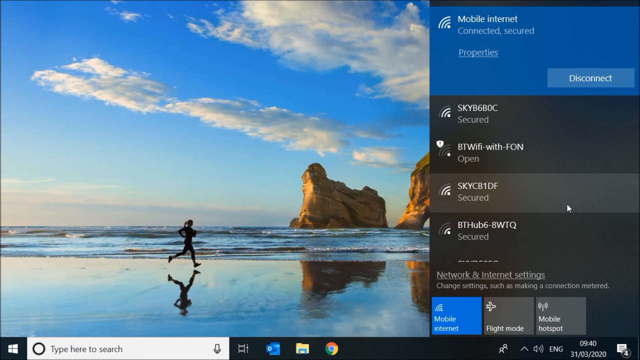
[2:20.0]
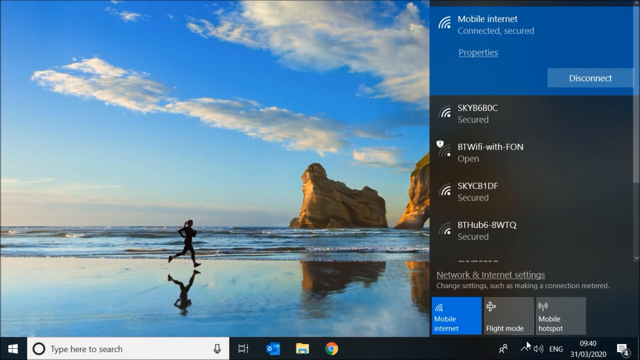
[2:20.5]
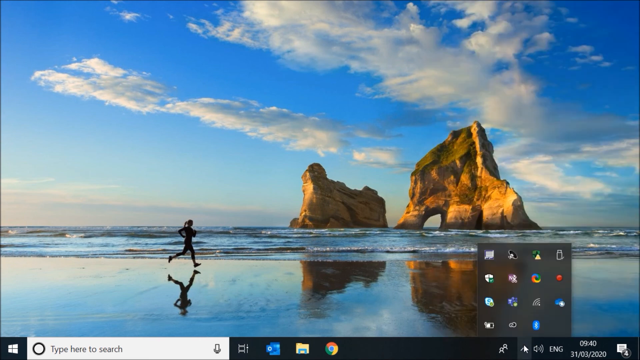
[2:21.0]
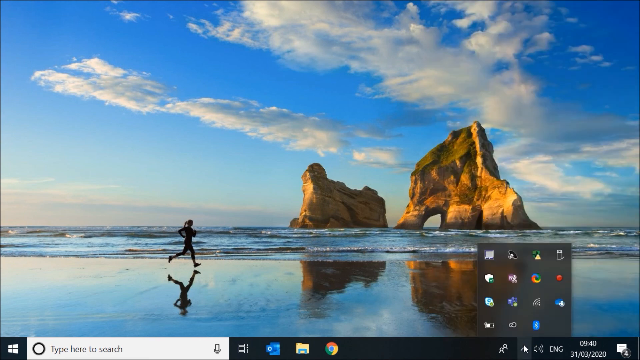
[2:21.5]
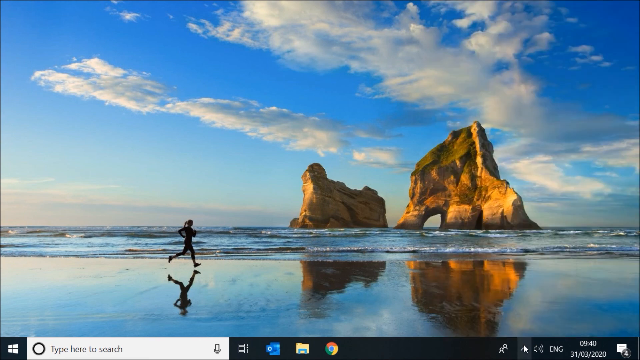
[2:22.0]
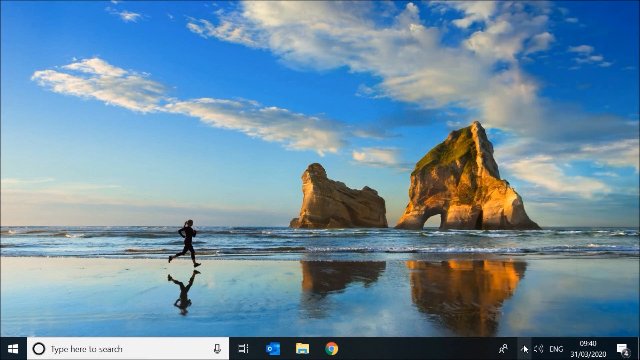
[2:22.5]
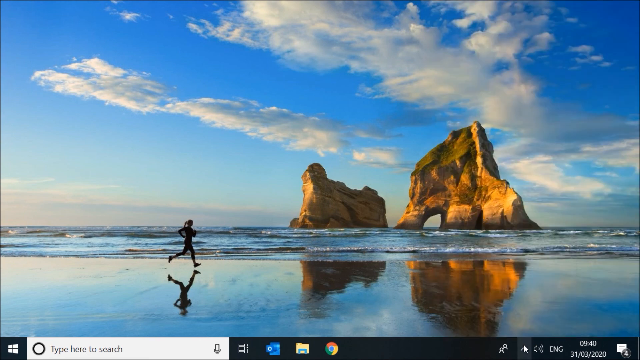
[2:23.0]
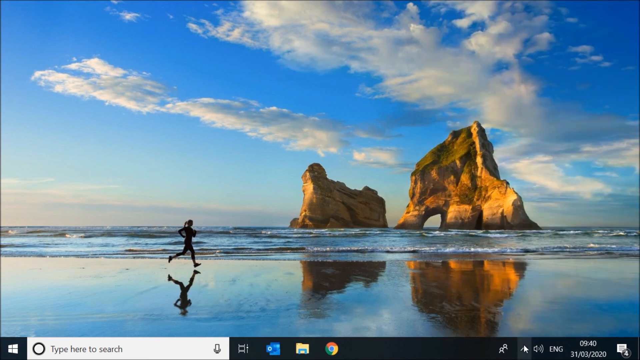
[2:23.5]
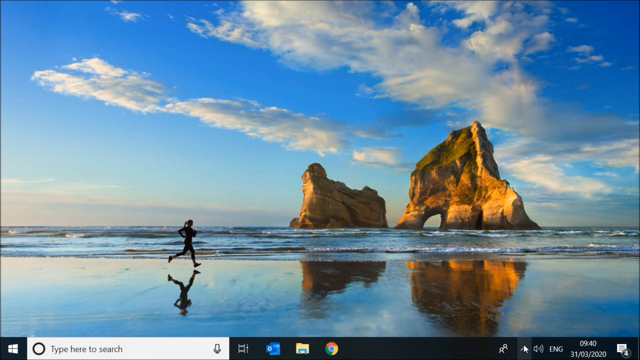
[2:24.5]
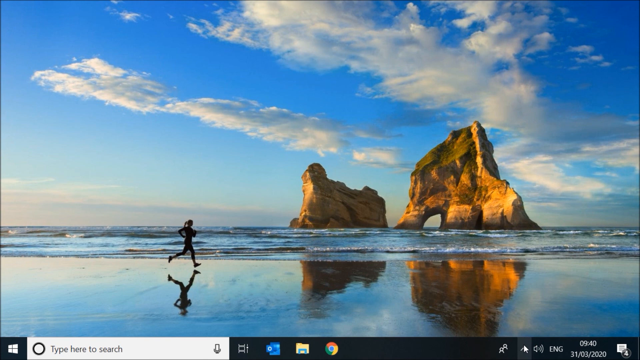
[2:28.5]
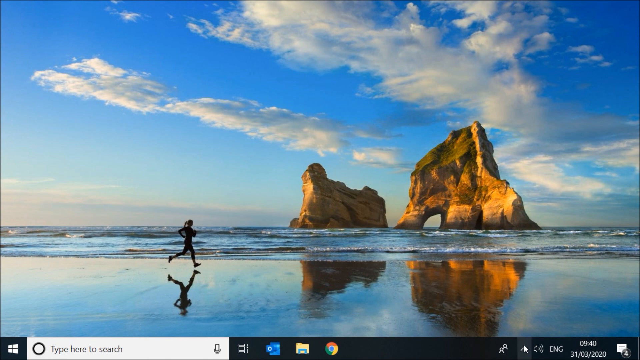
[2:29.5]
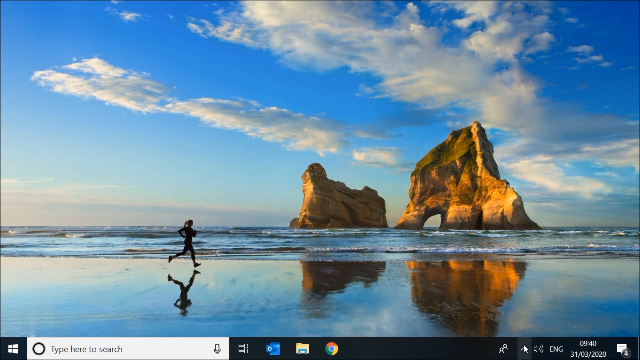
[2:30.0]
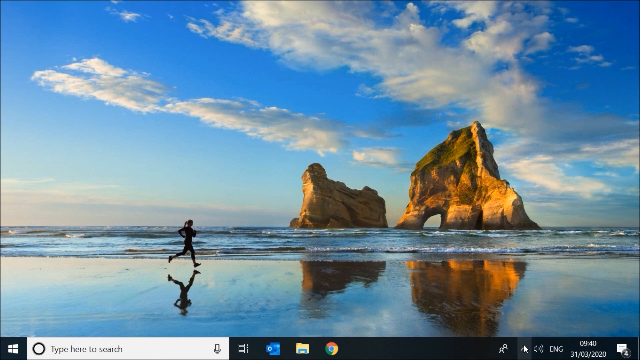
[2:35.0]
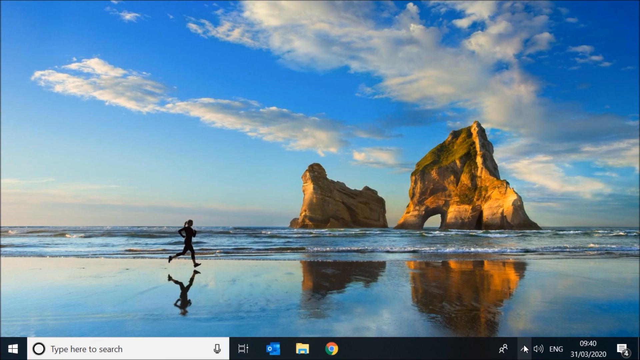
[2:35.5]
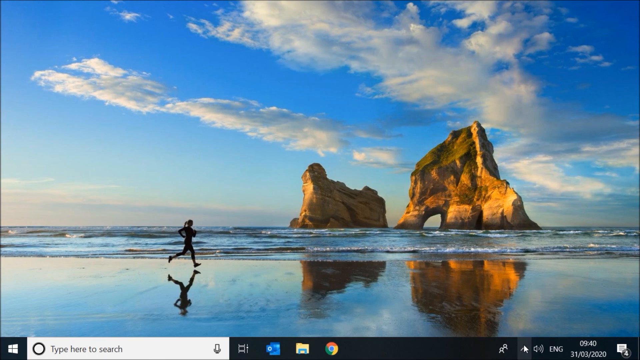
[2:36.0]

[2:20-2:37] On the right side of what seems to be a cell phone screen there is a menu; part of it seems to be highlighted in blue and the rest is kind of a dark gray. The highlighted part reads "mobile internet" in white text, with "connected secured" underneath and a button within the highlighted area reading "disconnect". The menu then disappears, leaving only the wallpaper: the silhouette of a woman running on a beach, with waves behind her and brown rocks that almost kind of look like a cliff. One of the rocks has an arc through it, with water going through.